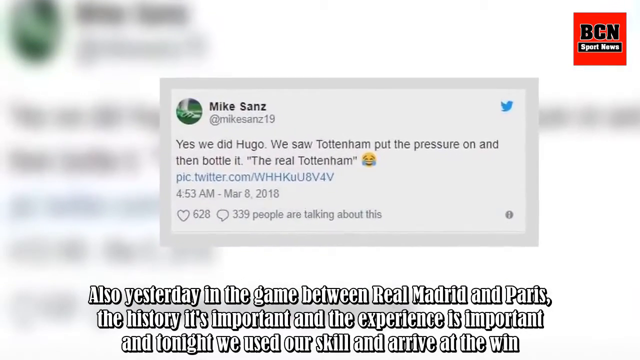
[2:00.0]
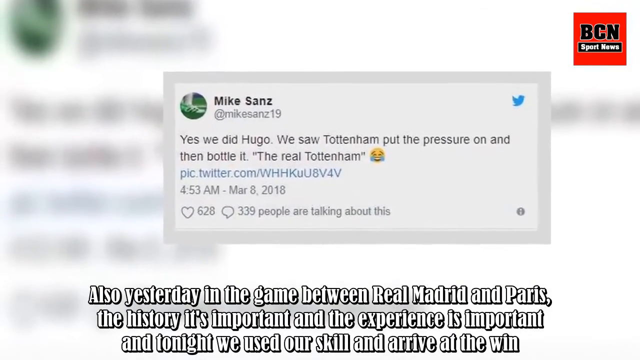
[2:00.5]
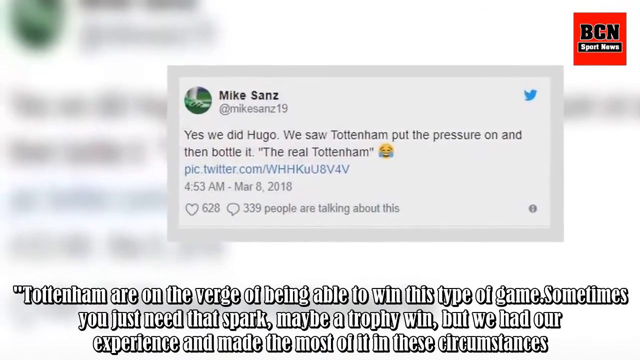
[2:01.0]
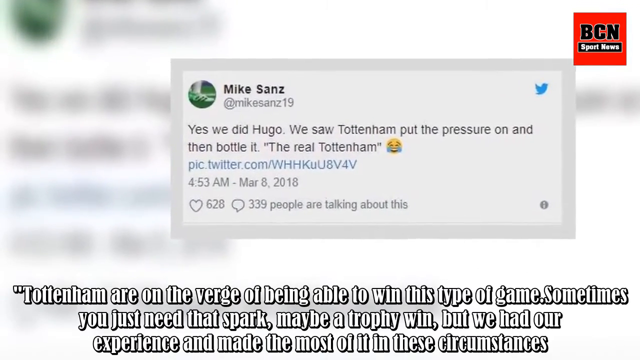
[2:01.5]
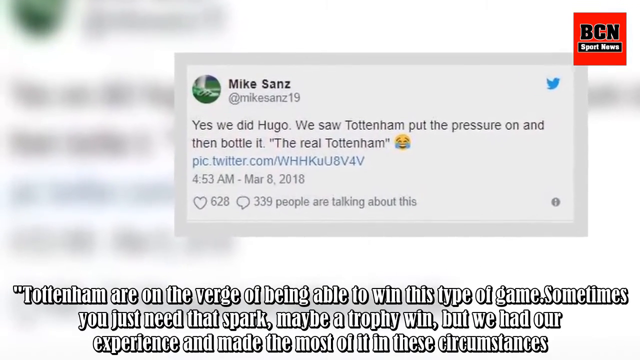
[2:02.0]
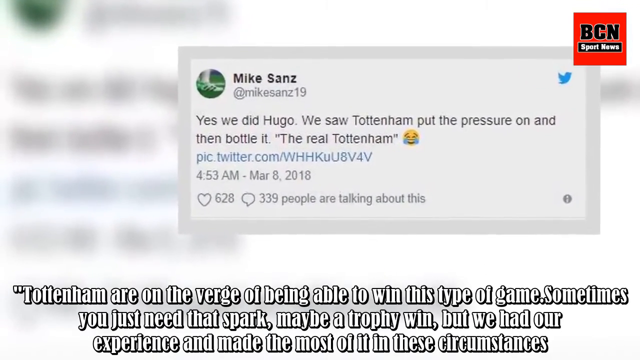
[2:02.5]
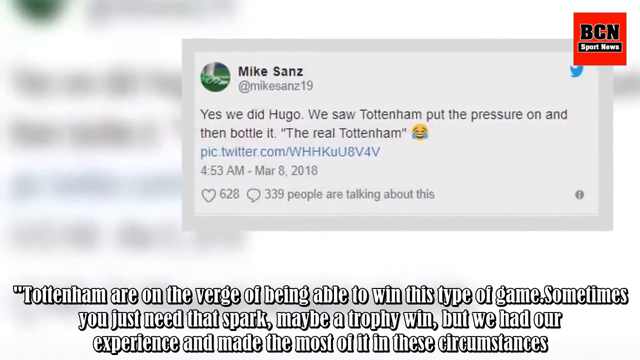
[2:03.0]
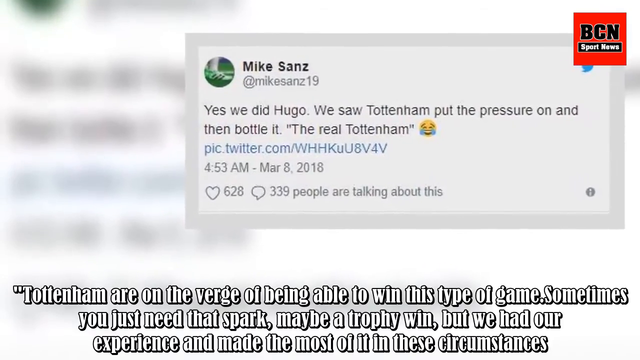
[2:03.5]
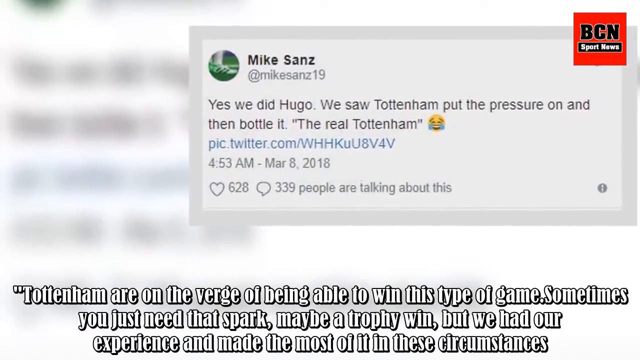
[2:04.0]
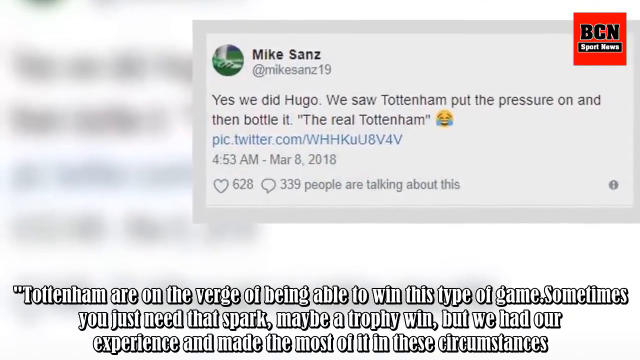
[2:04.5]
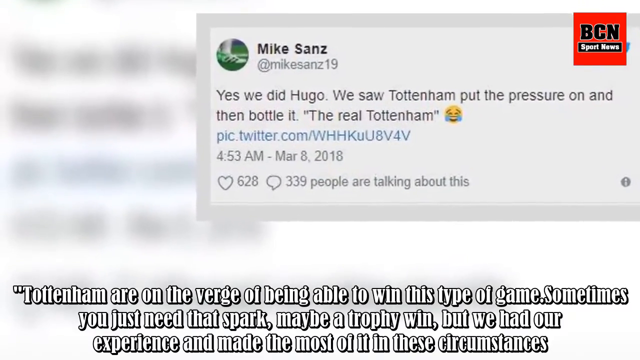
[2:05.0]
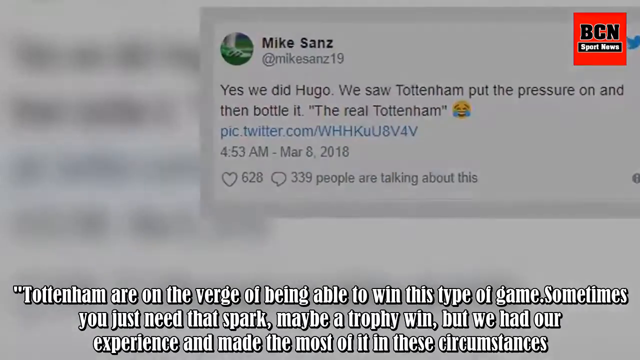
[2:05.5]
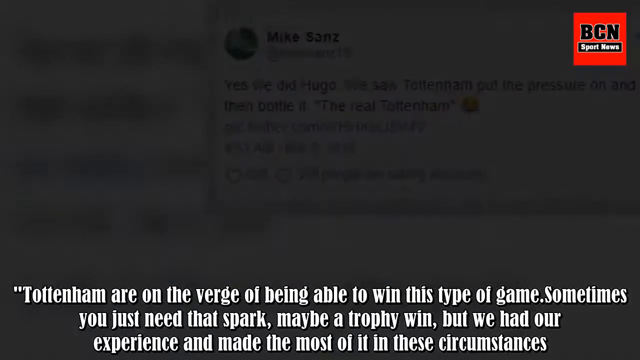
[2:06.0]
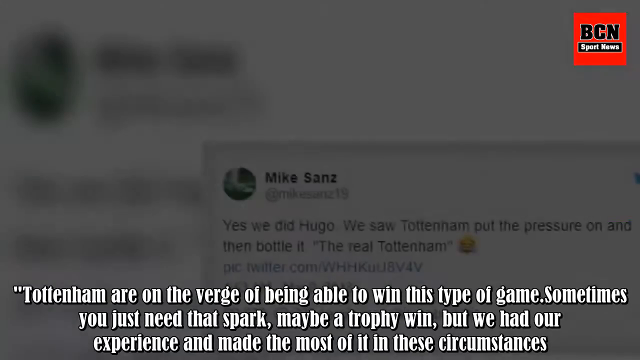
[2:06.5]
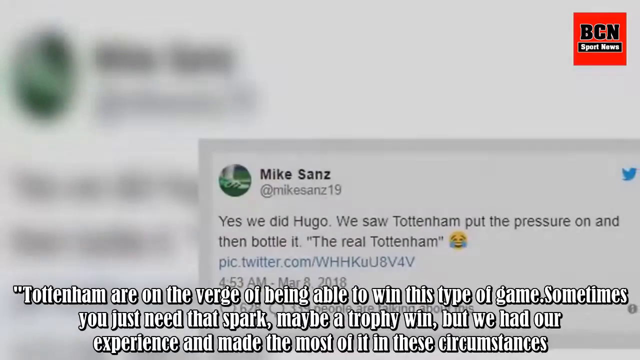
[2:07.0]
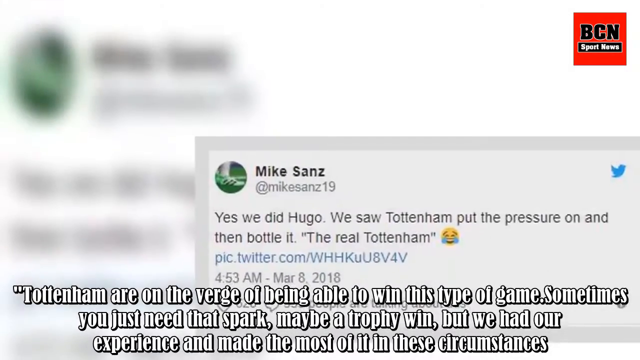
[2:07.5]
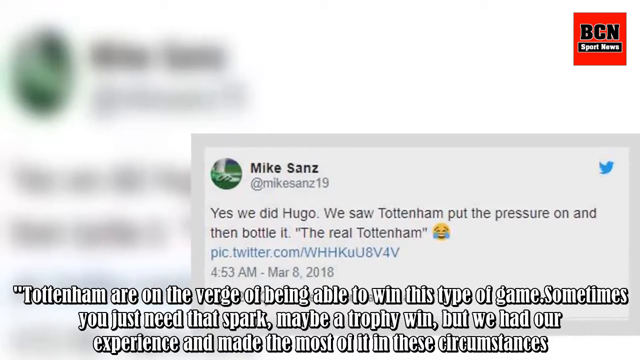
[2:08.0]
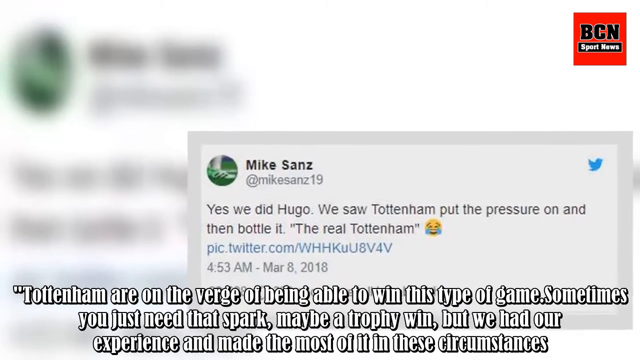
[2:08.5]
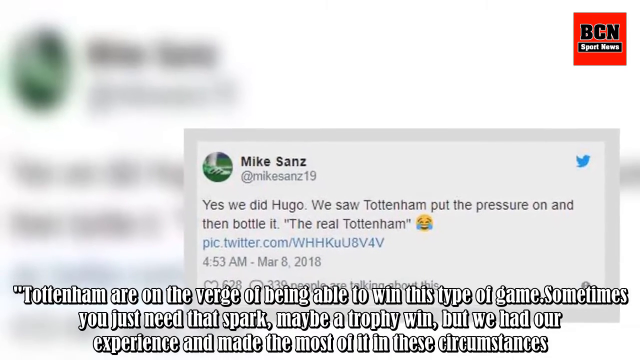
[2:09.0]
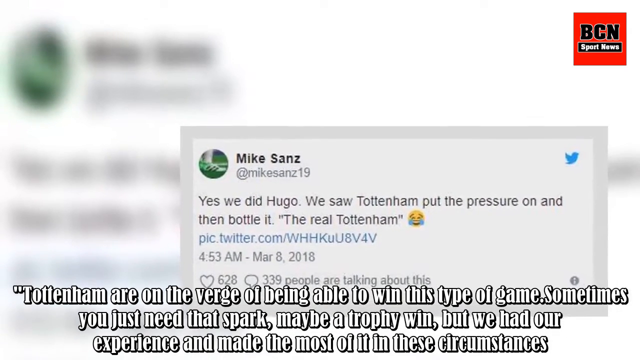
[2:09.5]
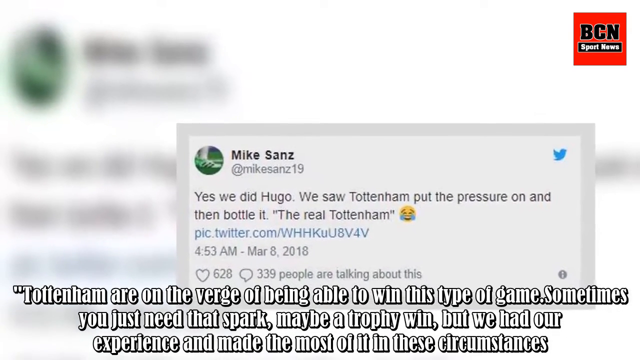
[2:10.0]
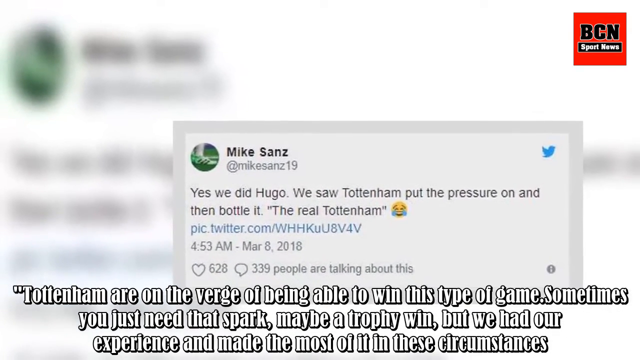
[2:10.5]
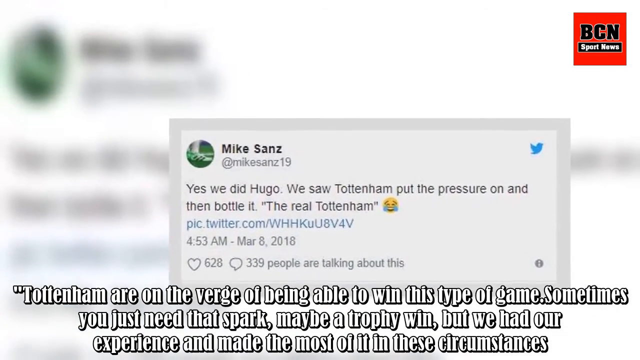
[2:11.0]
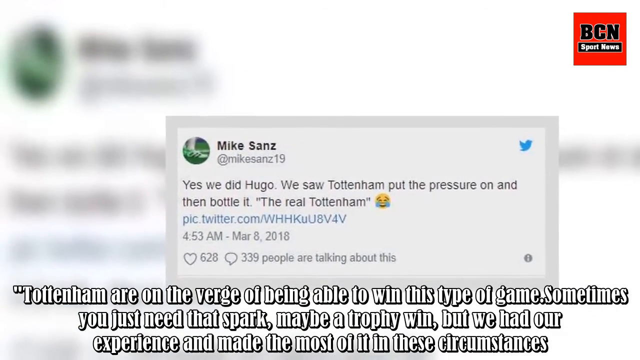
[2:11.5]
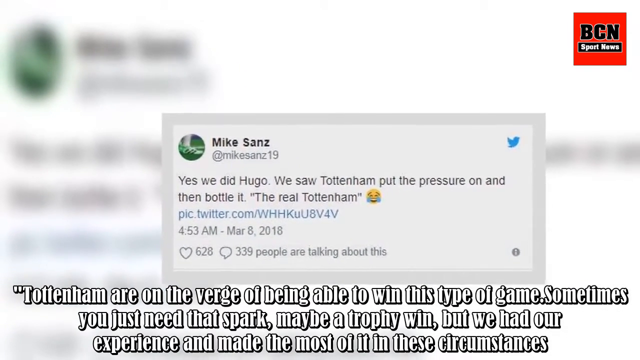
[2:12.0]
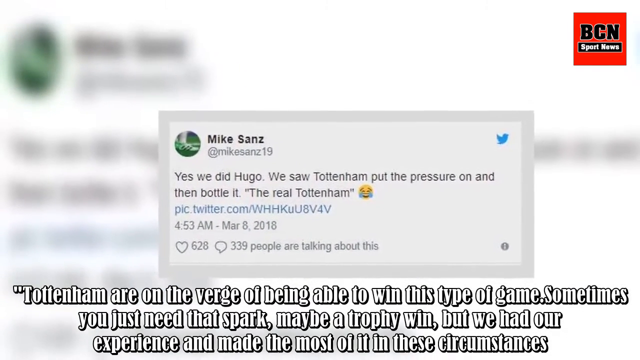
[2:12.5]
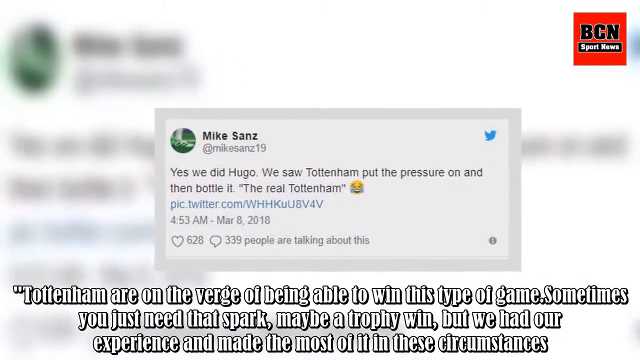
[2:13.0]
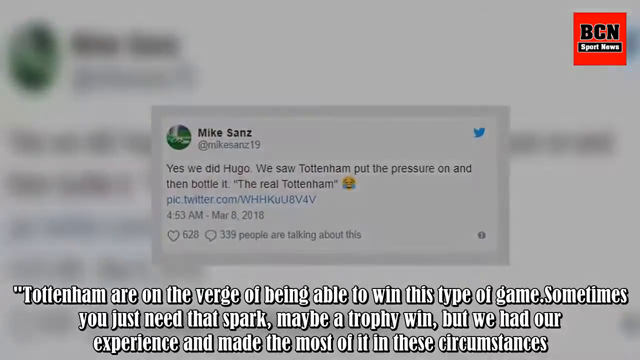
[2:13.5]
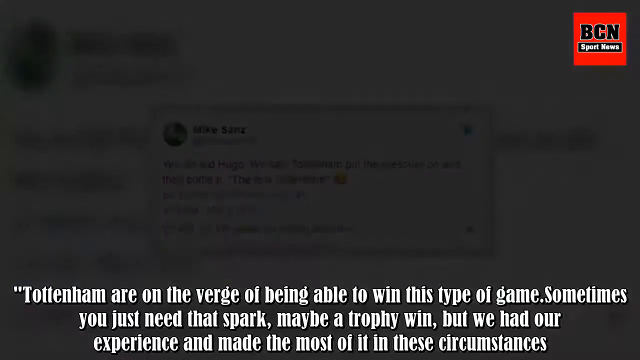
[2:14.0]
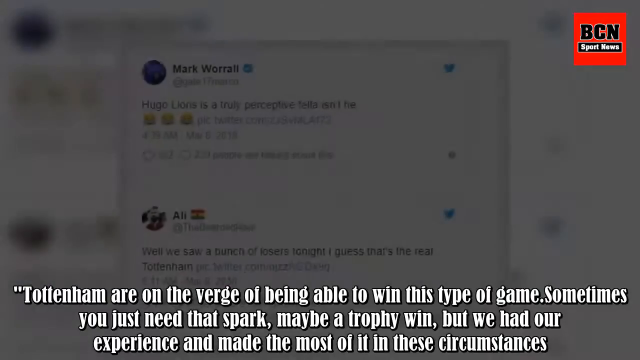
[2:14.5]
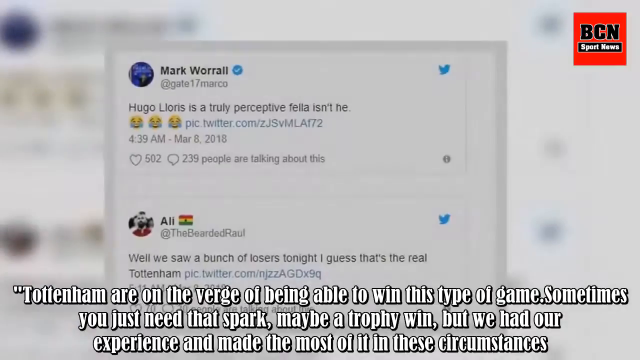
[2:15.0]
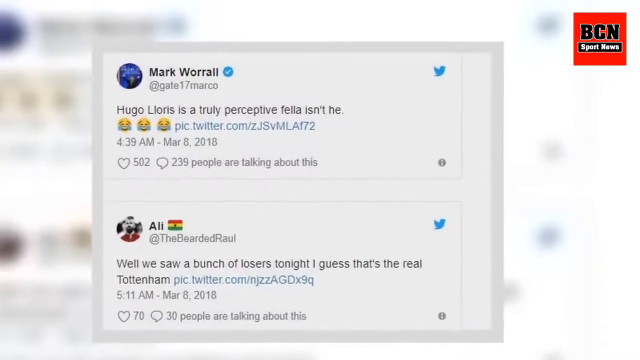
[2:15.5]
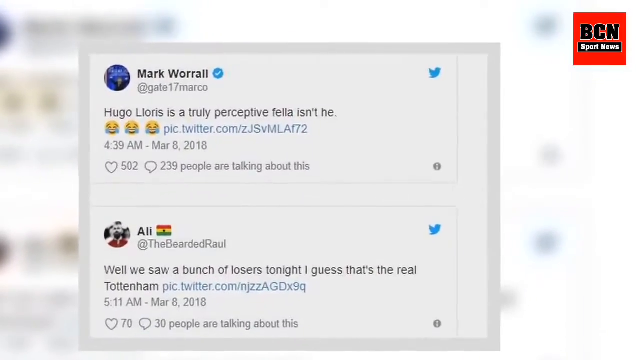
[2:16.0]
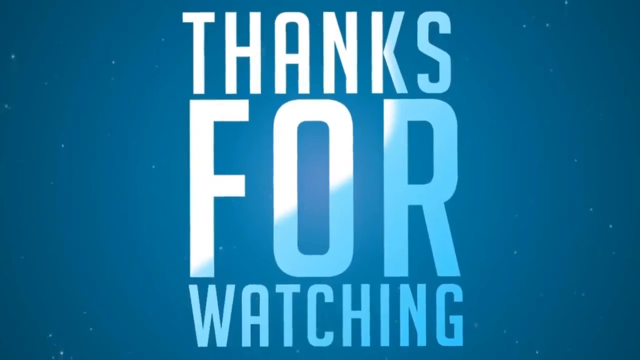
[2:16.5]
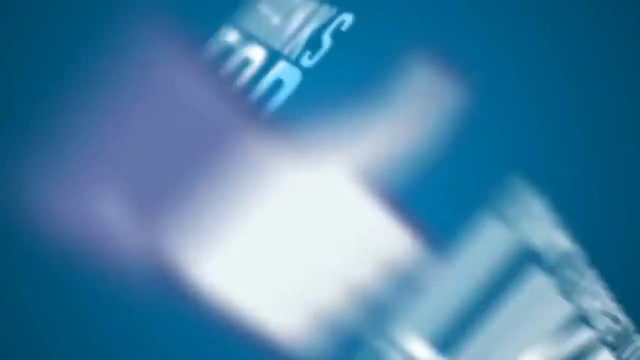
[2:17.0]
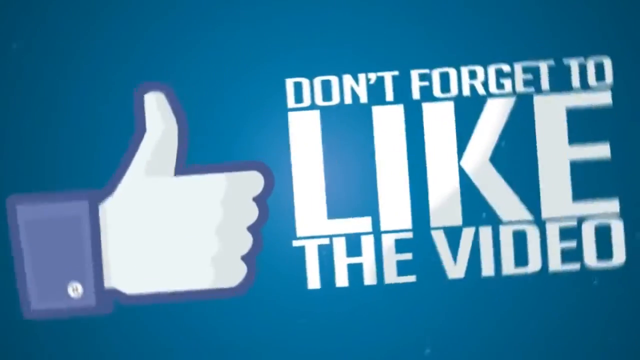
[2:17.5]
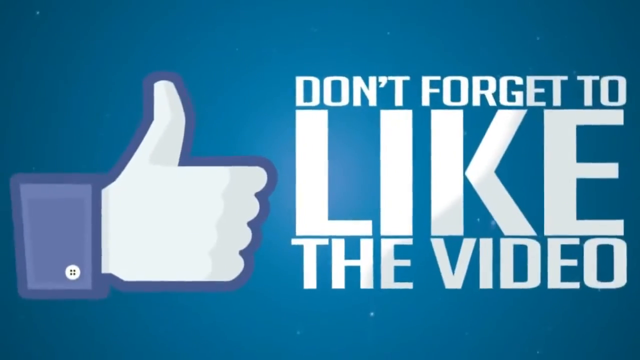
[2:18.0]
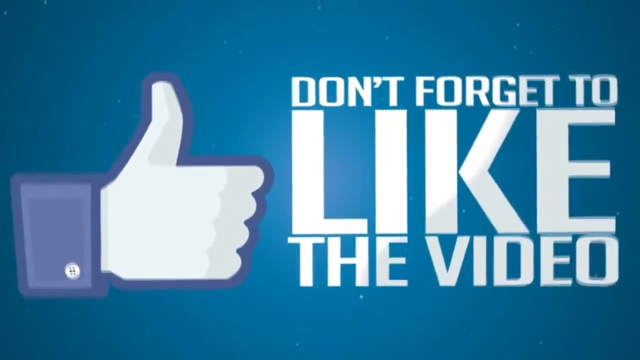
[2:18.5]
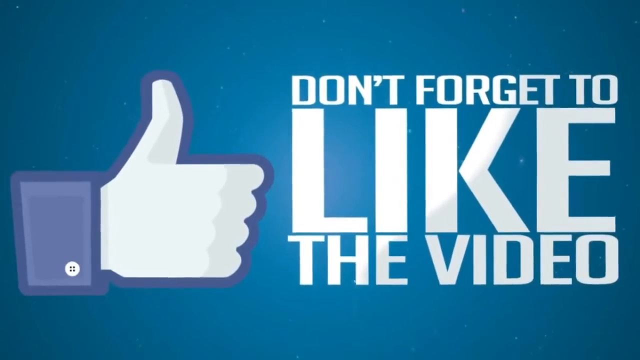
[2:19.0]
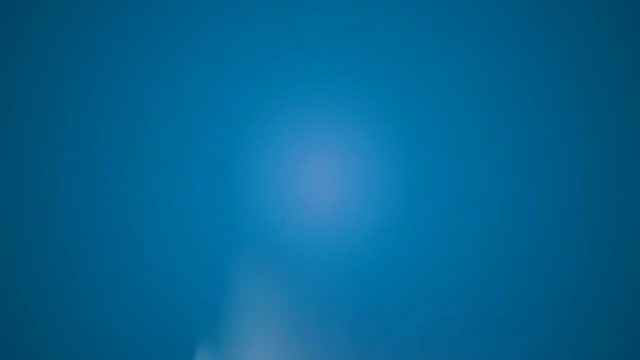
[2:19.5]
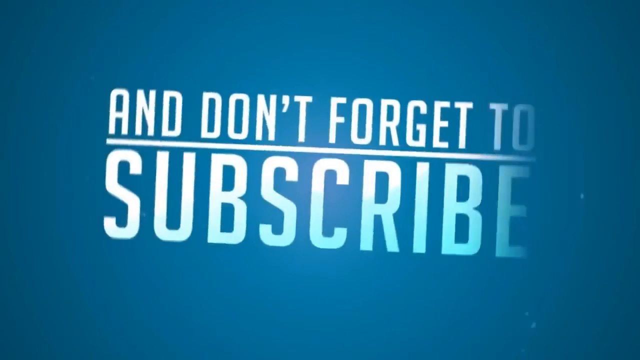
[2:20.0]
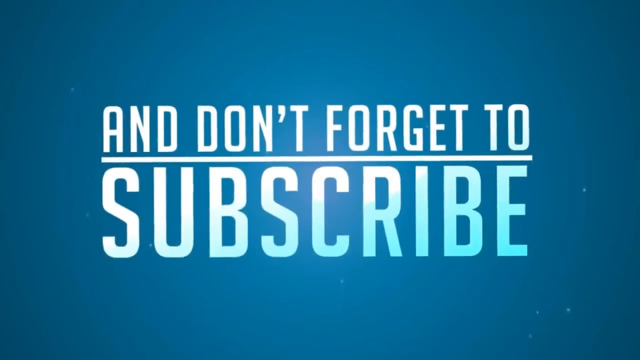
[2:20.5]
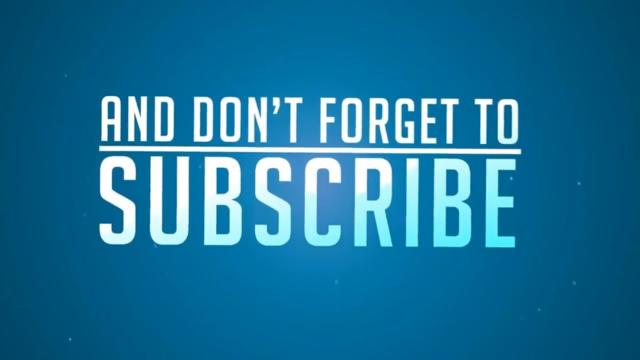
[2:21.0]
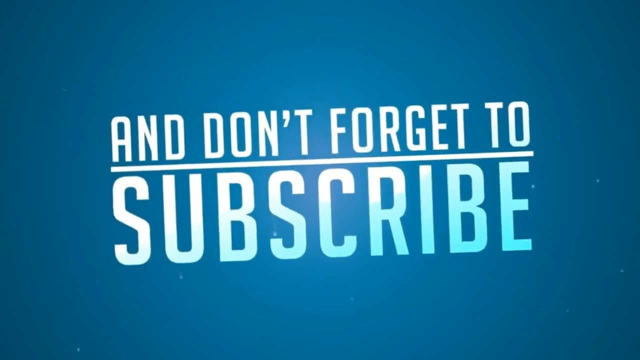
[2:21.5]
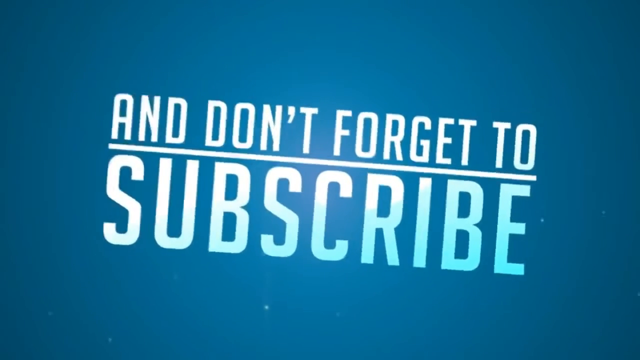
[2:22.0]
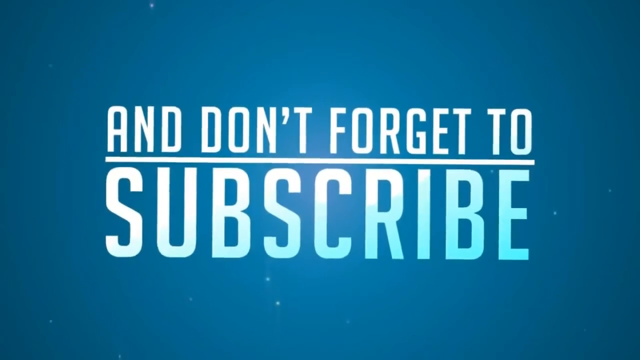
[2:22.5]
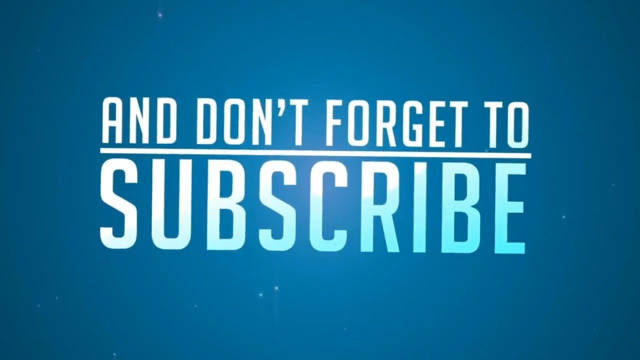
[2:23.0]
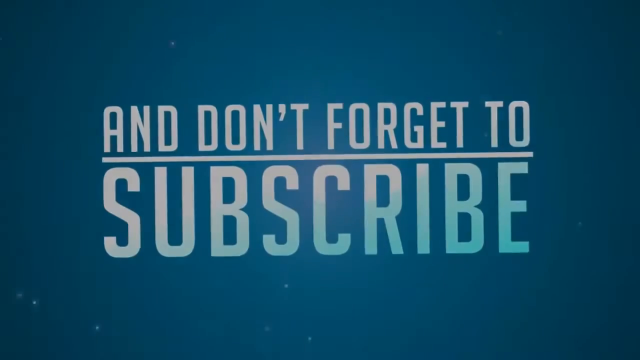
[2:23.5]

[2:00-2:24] The Mike Sanz tweet continues moving toward the top right corner, the upper right area. The captions at the bottom change, including the lines "Sometimes you just need that spark. Maybe a trophy win. But we had our experience and made the most of it in these circumstances." A tweet appears from the bottom right side and moves toward the center, and then a set of two tweets moves together to the left side. Next, a big "don't forget to like the video" caption appears on the right side with a thumbs up on the left side. Then the words "and don't forget to subscribe" appear in the middle on a blue background.